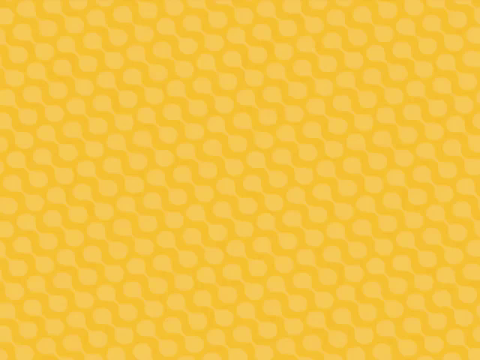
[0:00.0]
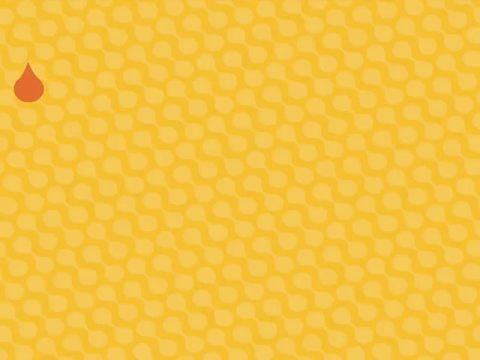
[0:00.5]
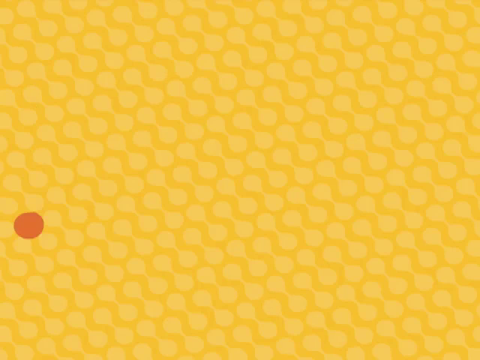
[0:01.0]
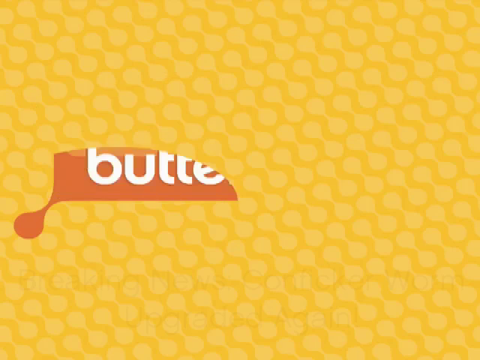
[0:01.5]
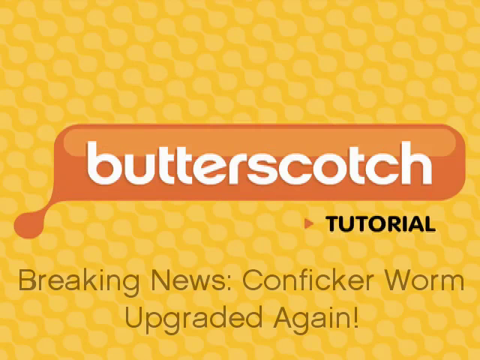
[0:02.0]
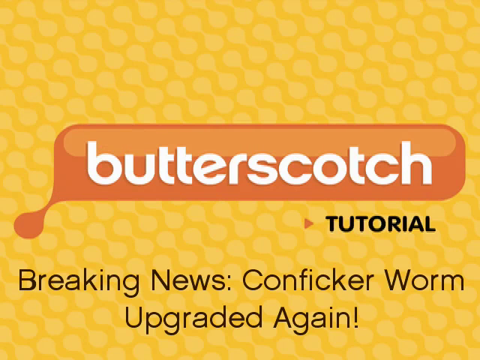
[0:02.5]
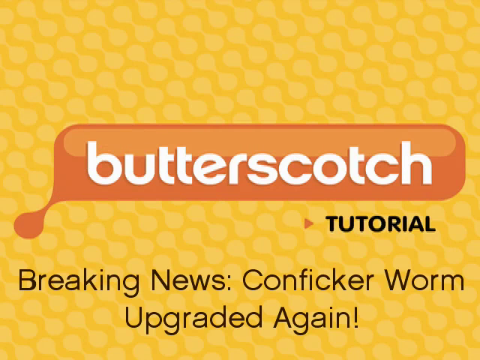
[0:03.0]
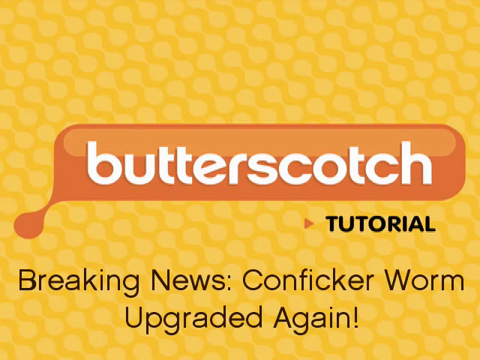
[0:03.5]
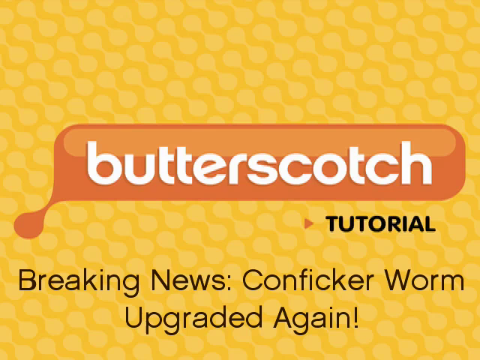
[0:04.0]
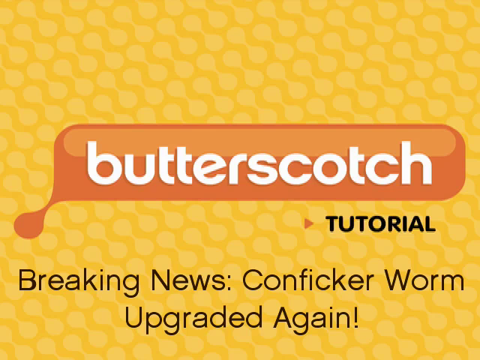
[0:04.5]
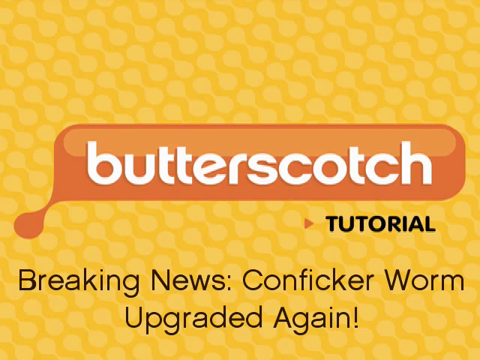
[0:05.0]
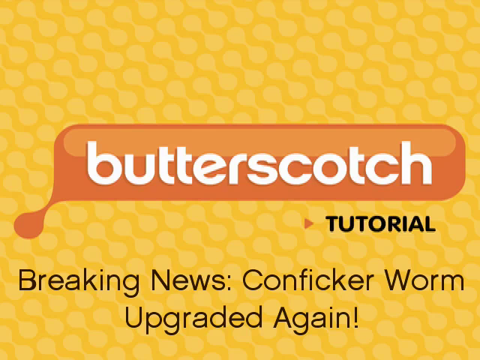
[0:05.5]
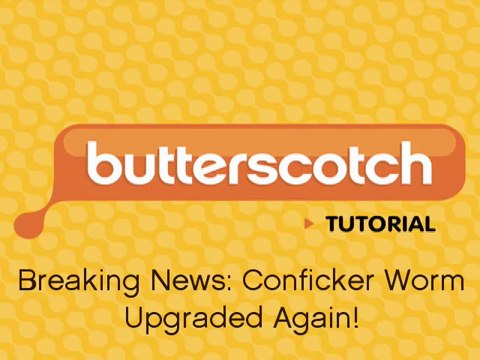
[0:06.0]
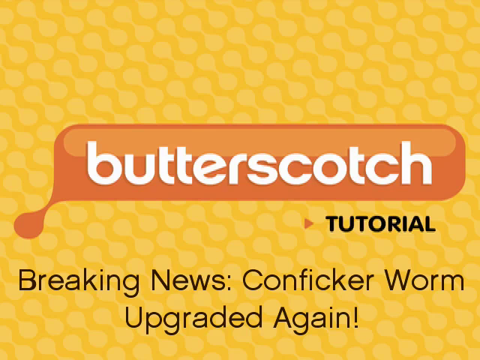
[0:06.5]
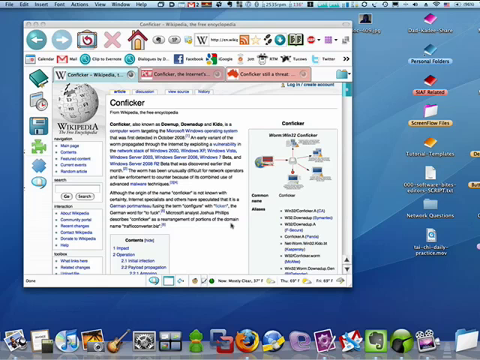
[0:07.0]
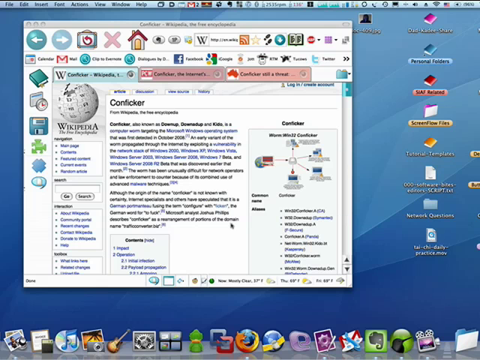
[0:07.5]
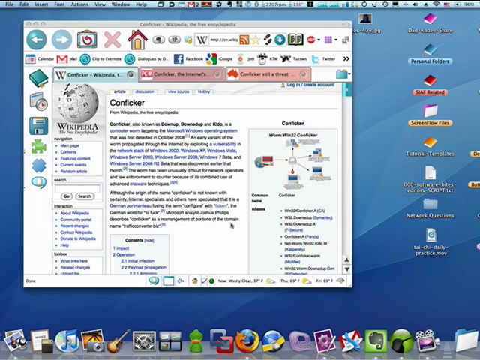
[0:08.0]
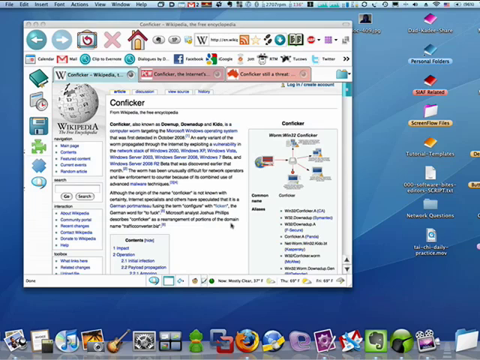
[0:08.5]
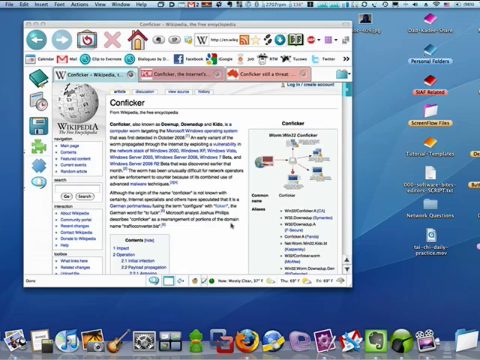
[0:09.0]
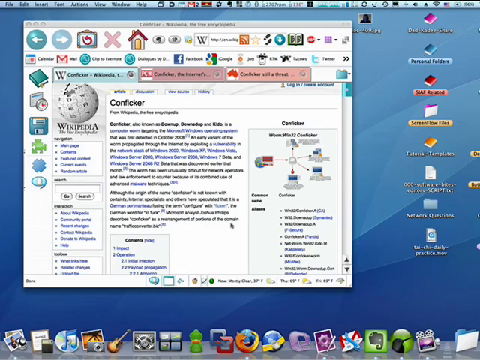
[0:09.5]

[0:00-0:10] The video opens on a light yellow patterned background, with a dumbbell-like shape repeated multiple times in a diagonal arrangement. A drop of brown is dropped onto the yellow background and then expands at its top into a rectangular comment box with rounded edges, also brown. Inside the big rectangle, on top, is a small light brown rectangle with oval edges, and the word "butterscotch" is written on it in bold white letters. Below it, on the bottom right outside the rectangle, "tutorial" is written in black in all caps, and below that "breaking news: conficker worm upgraded again!" is written over the yellow background. The screen then transitions to a laptop screen with many icons on its left, top and bottom, showing a Conficker Wikipedia page open in a browser. The Windows screen looks like an old version of the operating system.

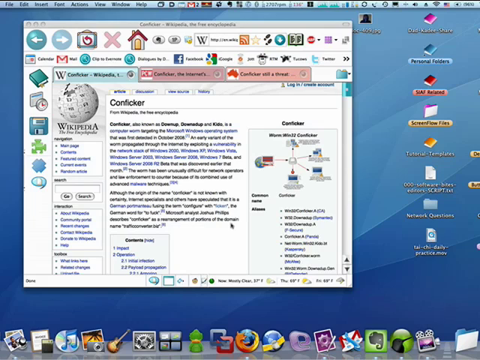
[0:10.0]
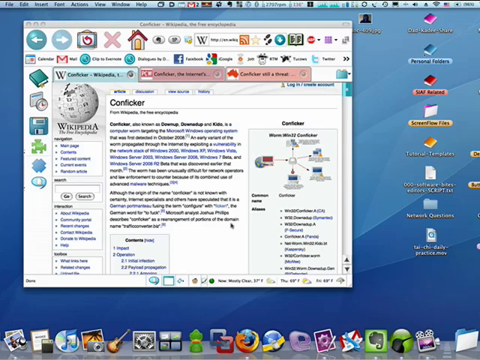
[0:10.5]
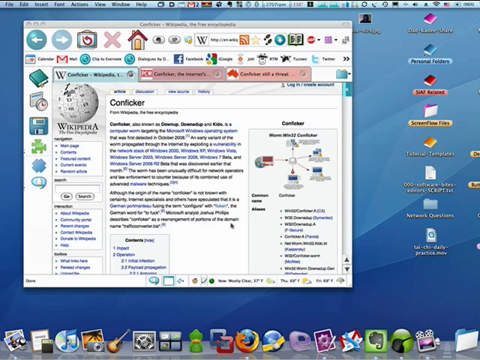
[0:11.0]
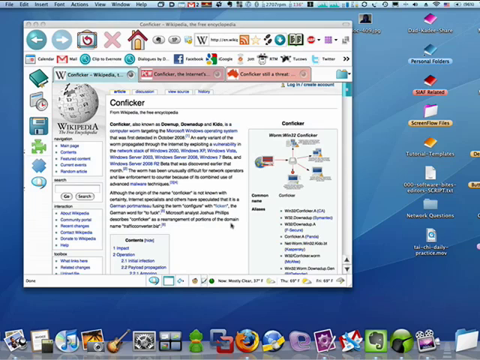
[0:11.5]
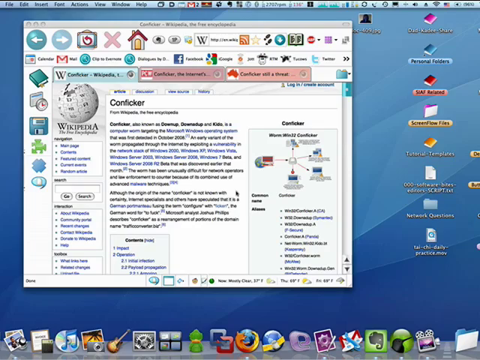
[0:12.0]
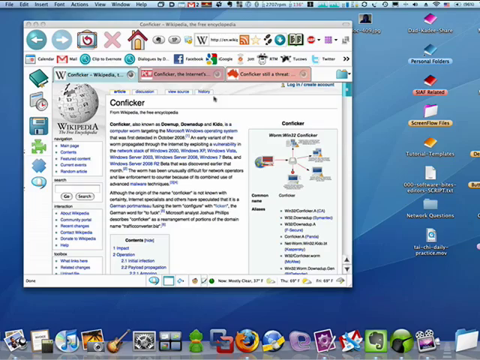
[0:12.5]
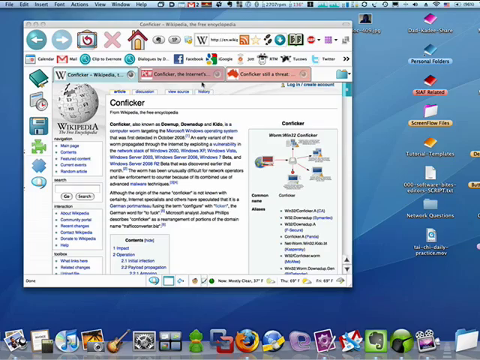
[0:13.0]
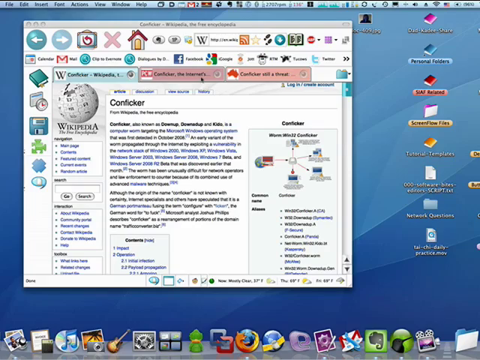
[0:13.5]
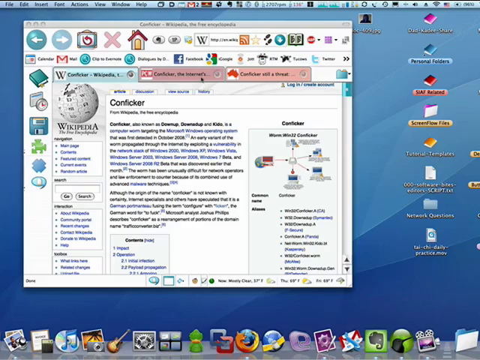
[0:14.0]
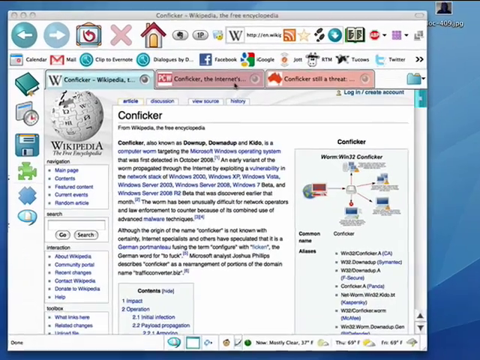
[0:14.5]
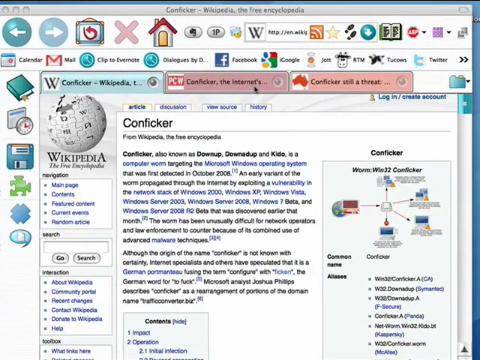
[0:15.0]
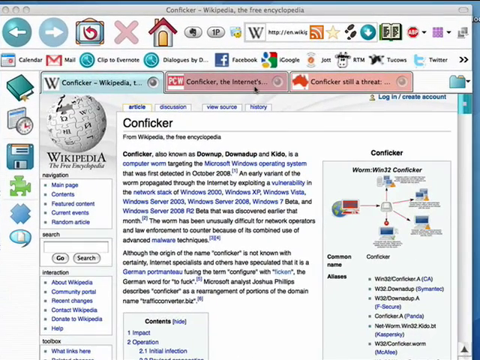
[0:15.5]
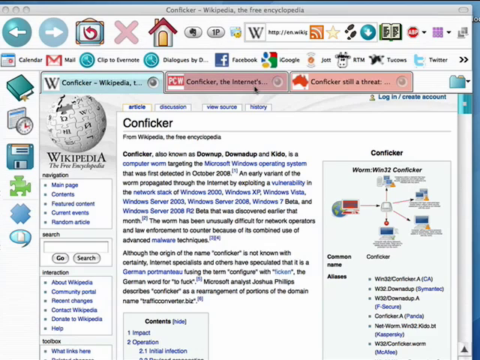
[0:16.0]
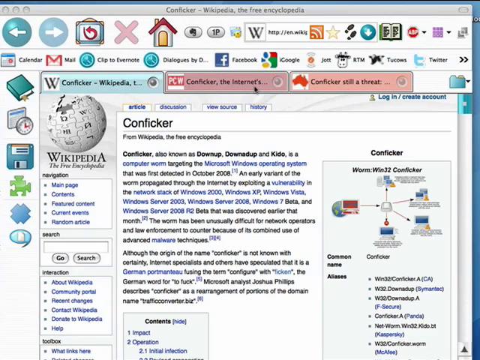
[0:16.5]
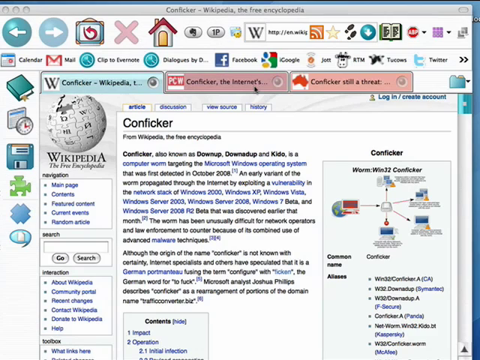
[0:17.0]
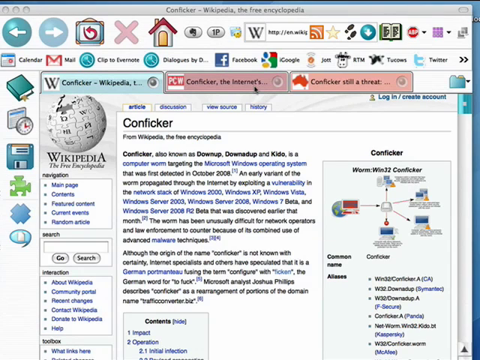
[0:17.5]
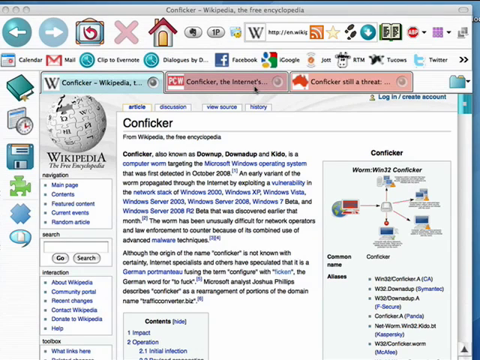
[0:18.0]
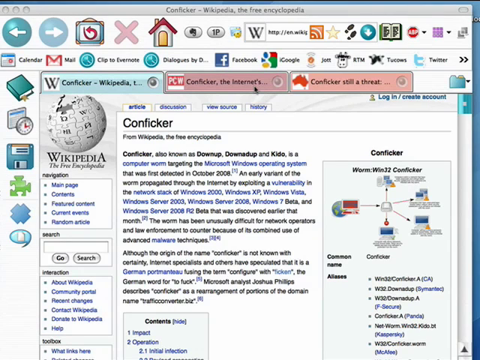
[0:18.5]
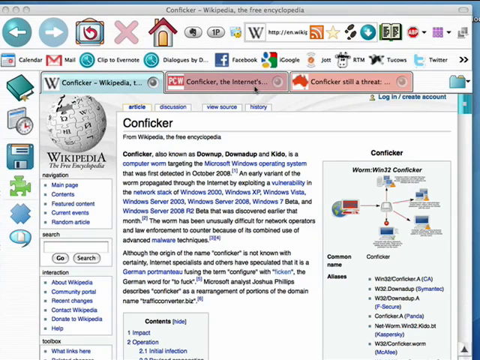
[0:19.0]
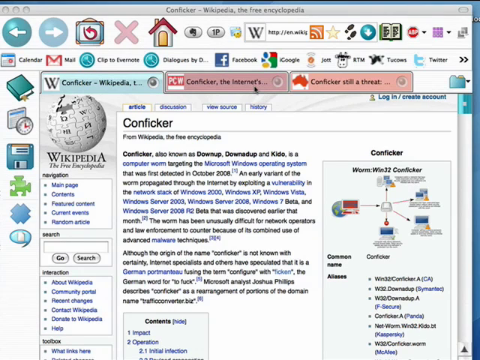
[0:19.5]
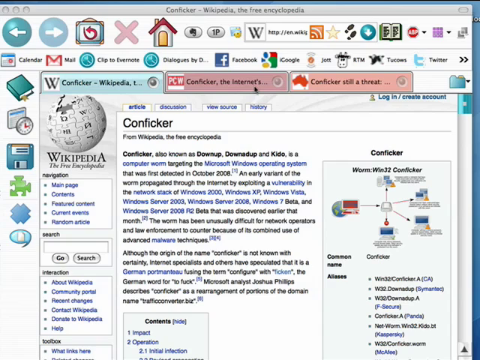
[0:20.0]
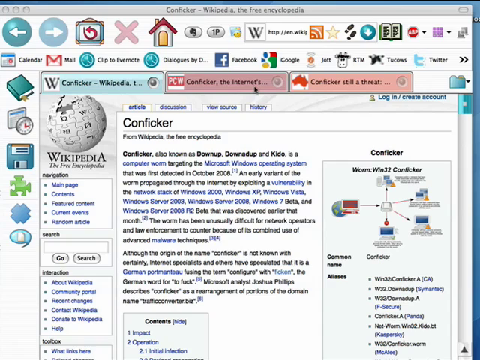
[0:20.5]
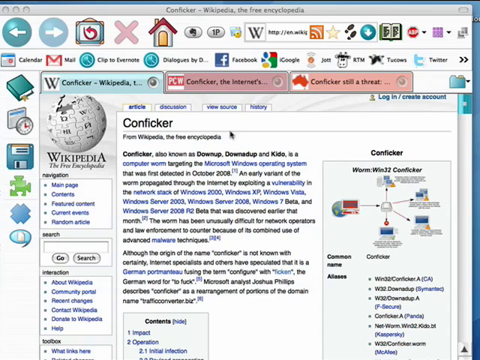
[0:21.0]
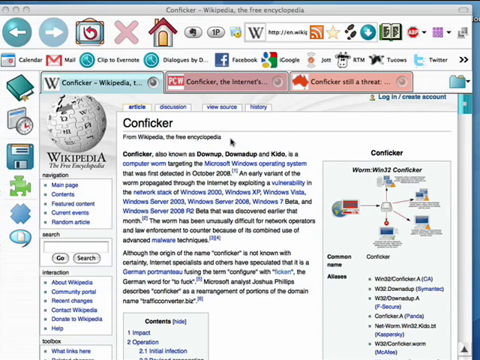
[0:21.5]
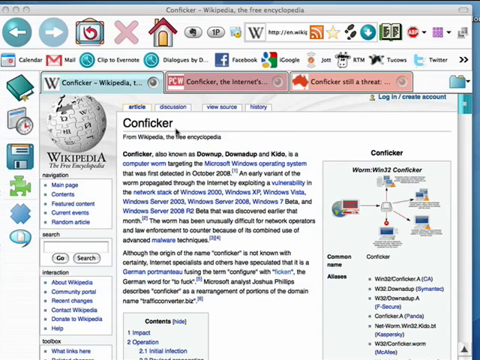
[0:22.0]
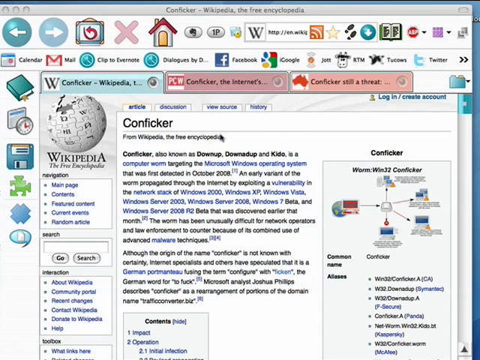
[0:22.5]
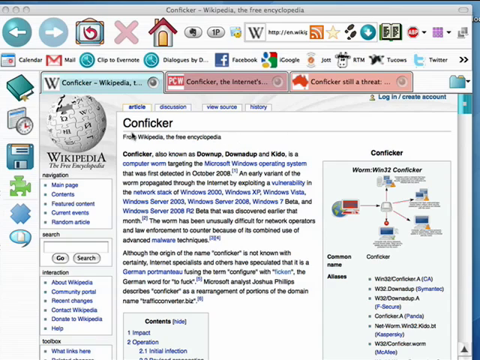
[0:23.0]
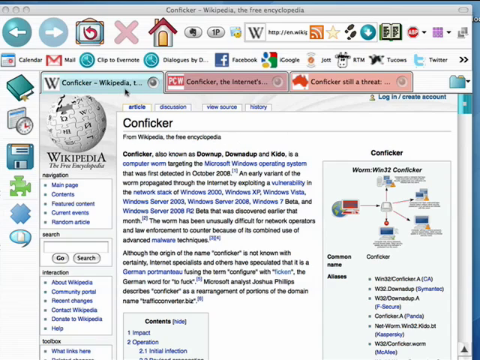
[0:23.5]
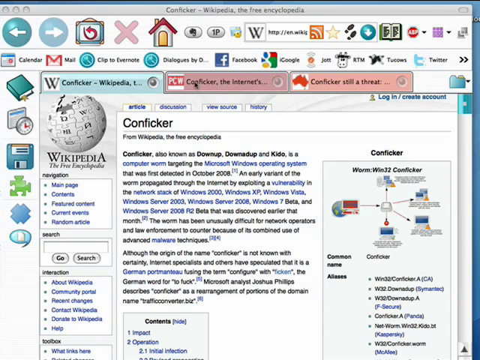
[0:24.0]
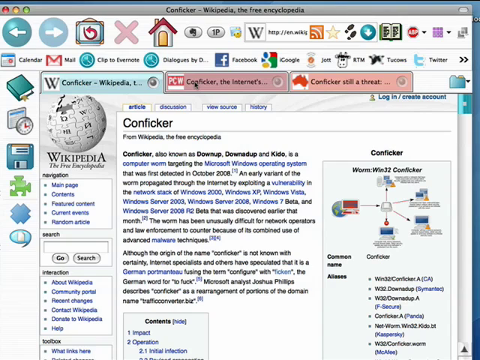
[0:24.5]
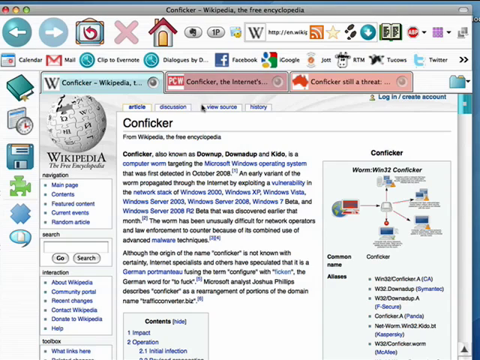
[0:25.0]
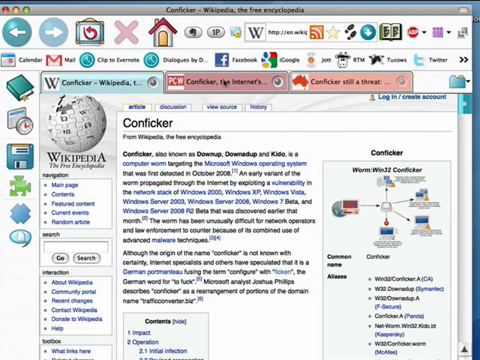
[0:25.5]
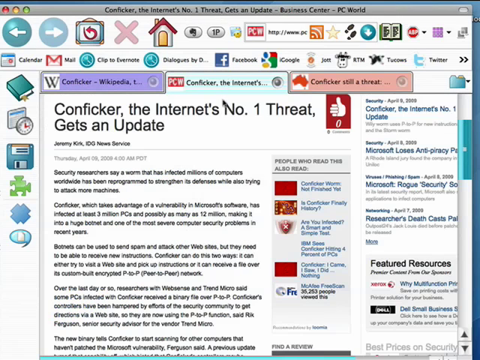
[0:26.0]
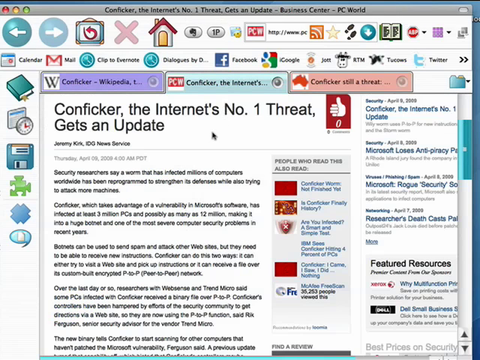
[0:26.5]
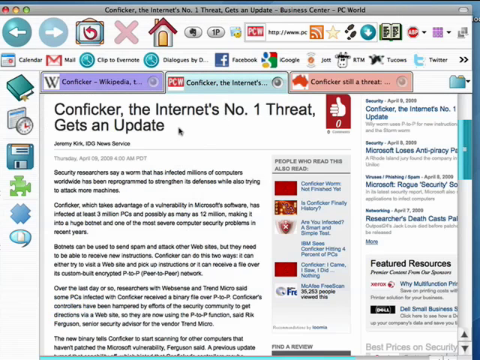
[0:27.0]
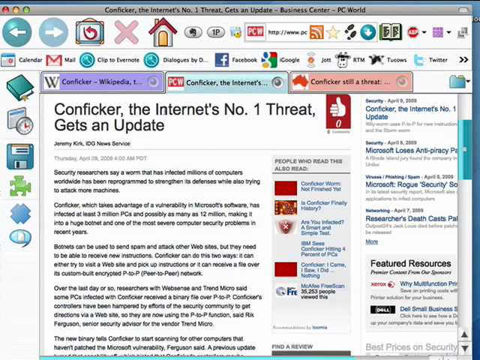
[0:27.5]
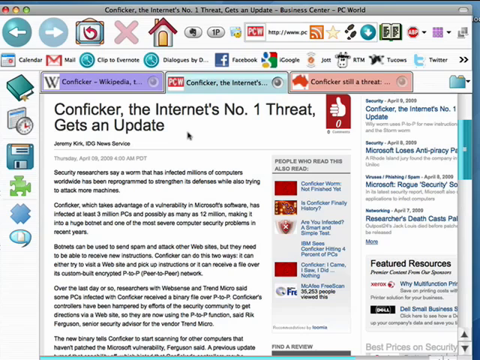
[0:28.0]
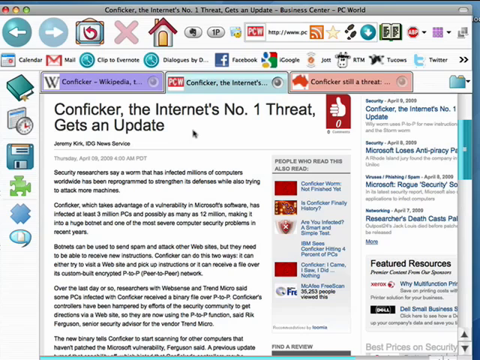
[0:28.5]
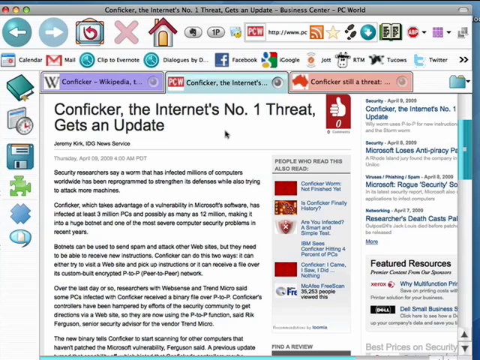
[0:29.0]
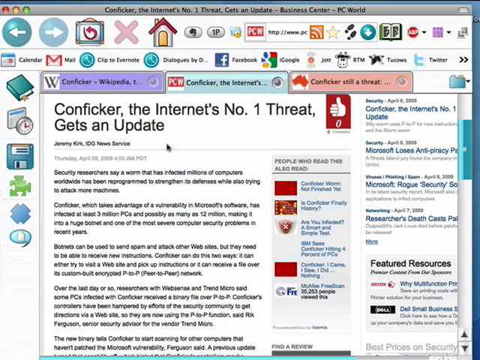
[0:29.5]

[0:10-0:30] A laptop screen shows various icons on its top left and bottom; they look like very old operating system icons. The main content of the screen is a web page with the Conficker Wikipedia page open, along with two other tabs to its right highlighted in light red. The mouse pointer hovers over the Conficker Wikipedia contents, then moves up to the second tab, and the screen is zoomed so that only the webpage fills the whole screen. The black mouse pointer hovers over the Conficker Wikipedia heading and contents again and then goes back to the second Conficker tab. The second tab is clicked, displaying "Conficker the Internet's number one threat gets an update", and the mouse hovers over this heading. The website's icons are also old, large icons, and the screen background is a simple light and dark blue with a few patches.